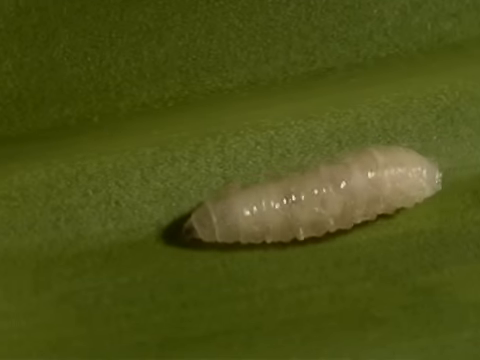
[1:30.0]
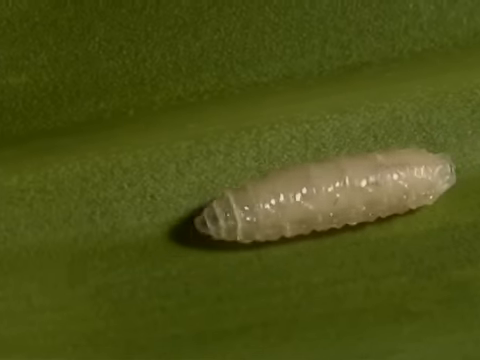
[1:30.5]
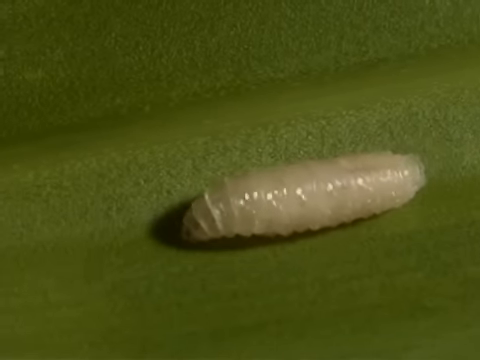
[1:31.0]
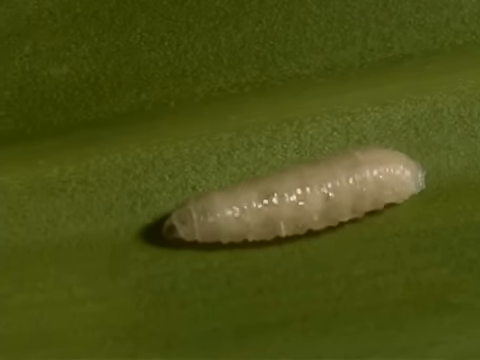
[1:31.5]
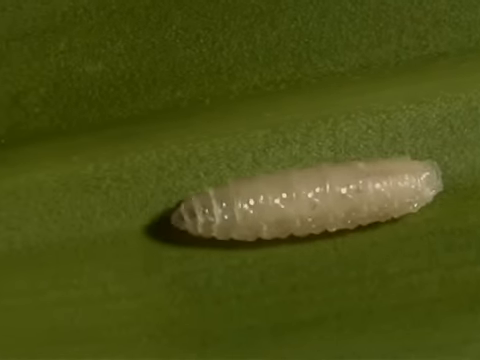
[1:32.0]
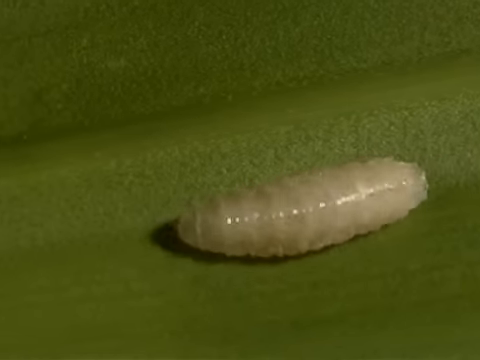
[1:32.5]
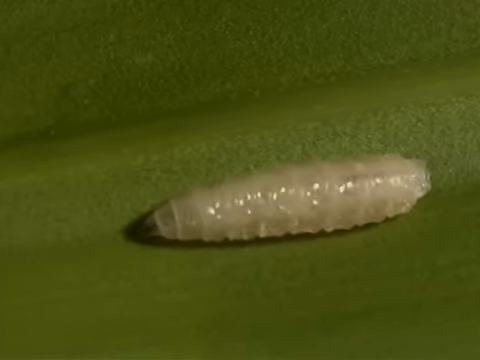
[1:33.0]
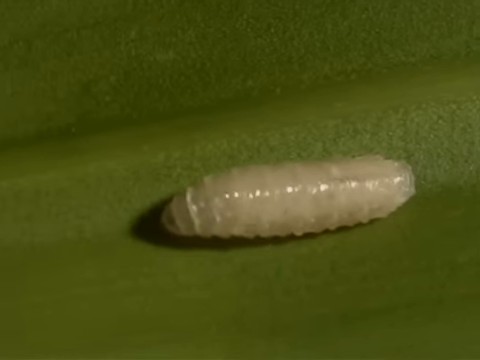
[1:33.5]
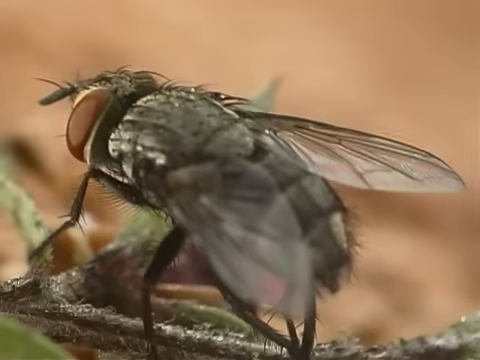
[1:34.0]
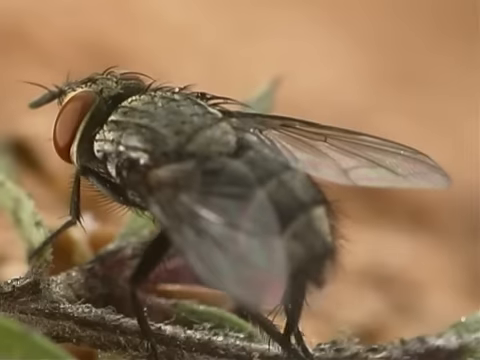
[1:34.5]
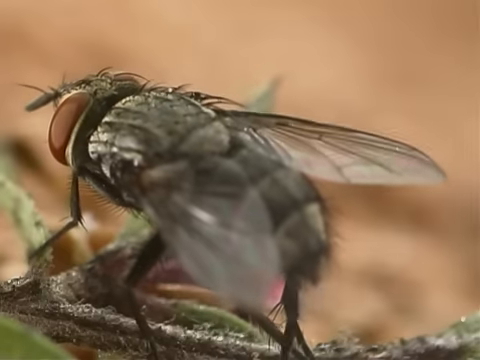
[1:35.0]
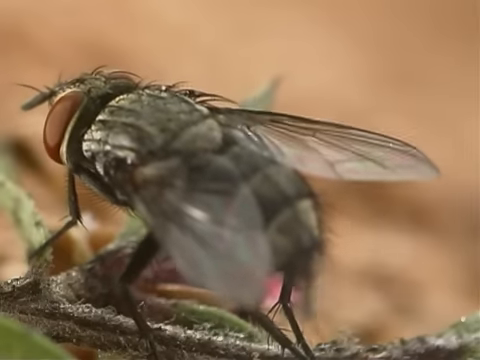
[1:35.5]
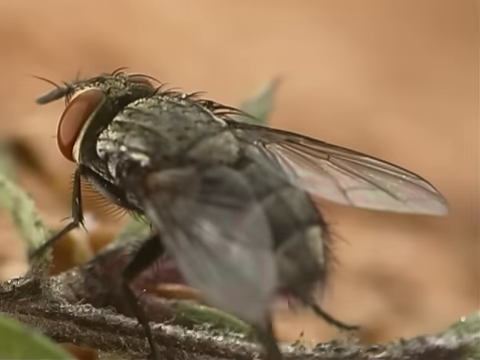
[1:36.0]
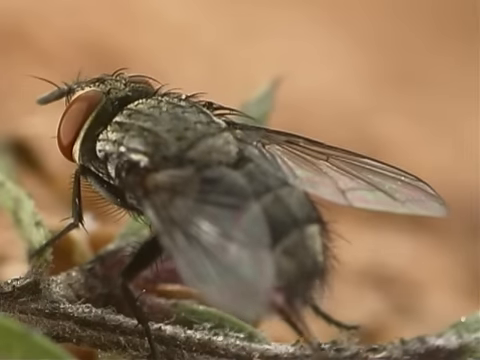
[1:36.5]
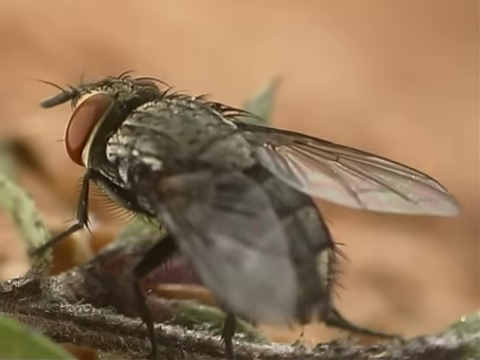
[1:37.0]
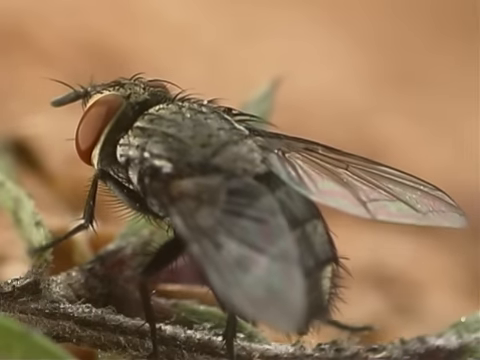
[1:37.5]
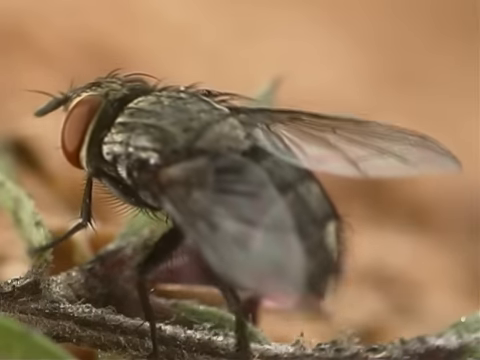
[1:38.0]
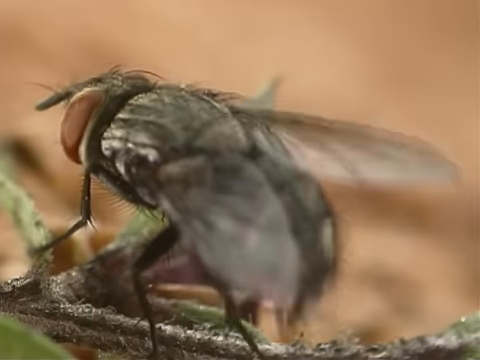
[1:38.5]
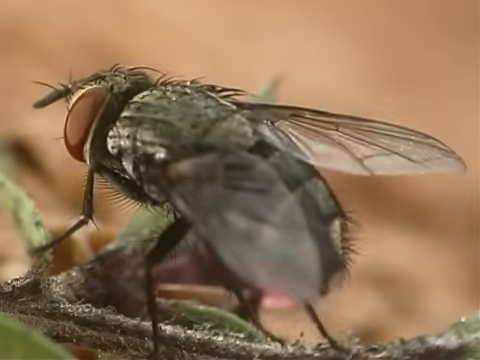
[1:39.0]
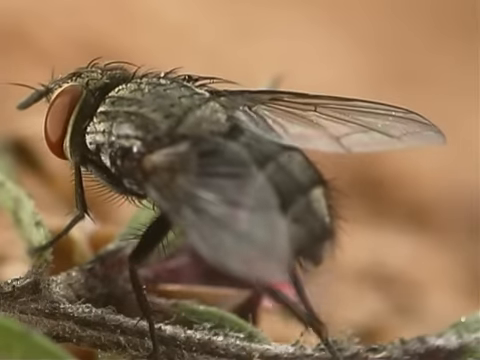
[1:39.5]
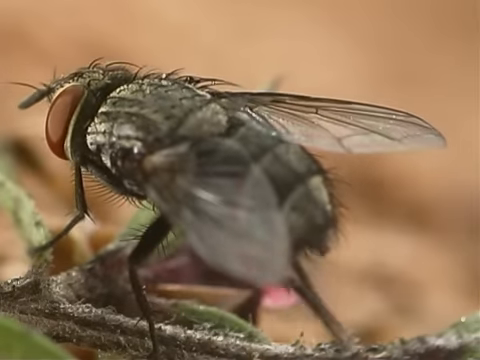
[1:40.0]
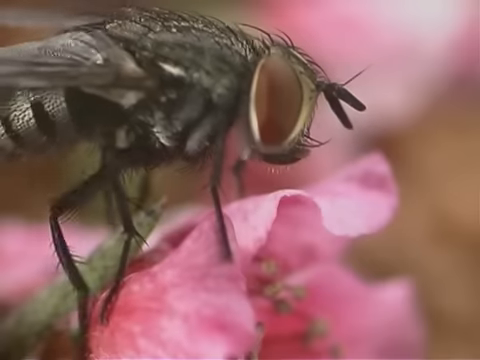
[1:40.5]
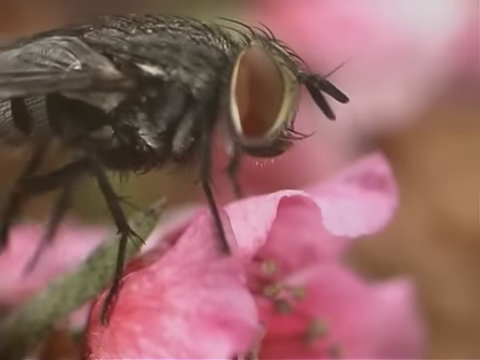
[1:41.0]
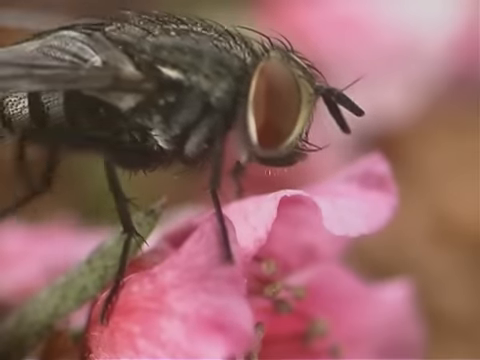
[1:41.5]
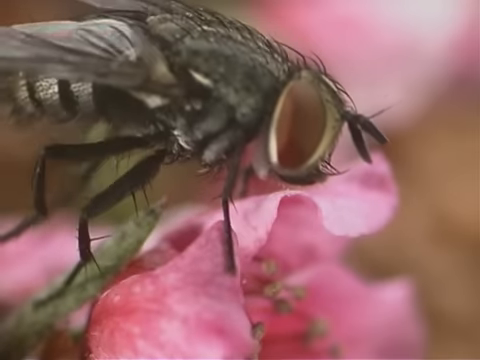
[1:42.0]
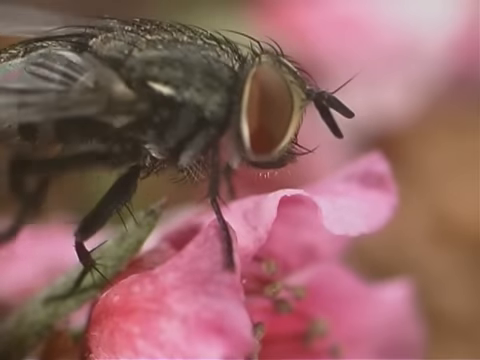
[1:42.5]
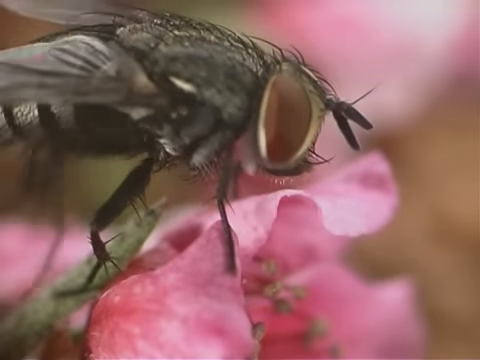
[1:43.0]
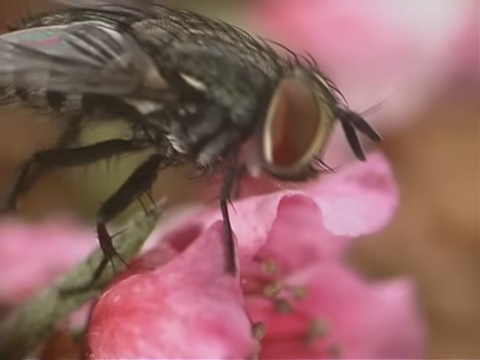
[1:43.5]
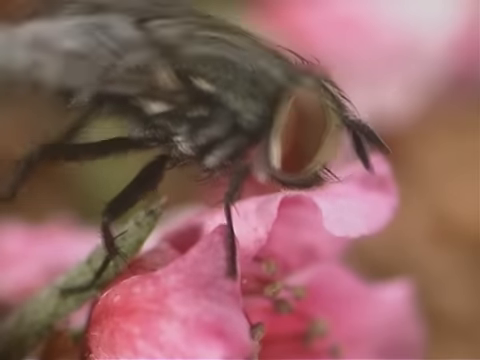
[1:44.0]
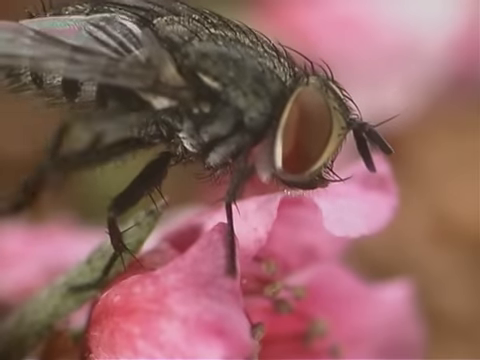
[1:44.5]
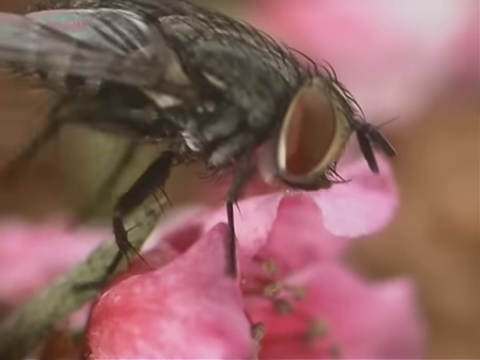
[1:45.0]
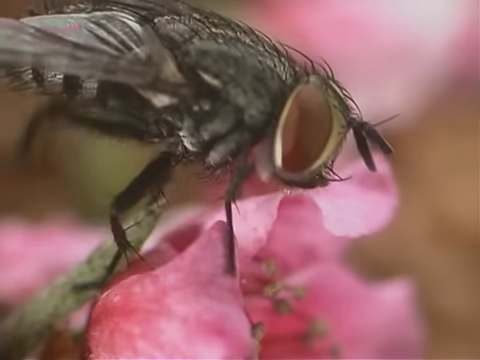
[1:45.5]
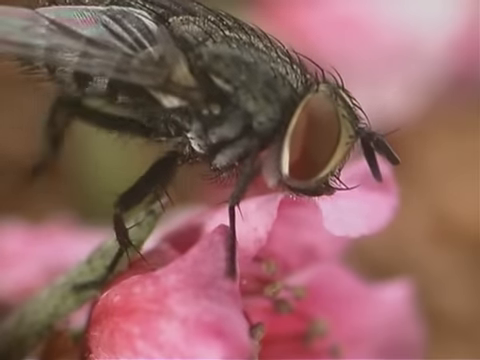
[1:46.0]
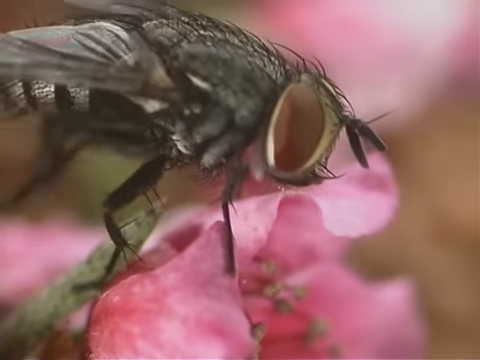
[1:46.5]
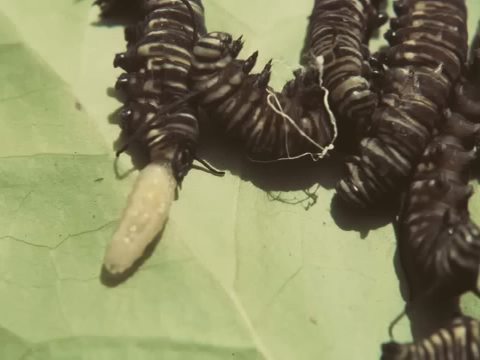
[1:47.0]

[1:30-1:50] The pupa continues its caterpillar-like movement across the green leaf. The video then moves back to a fly, seen from behind, showing its two transparent wings and its three body parts: the head, thorax and abdomen. The fly sits on what looks like a leaf or some light leaf stems. Its antennae are at the front of the head, followed by two orange eyes, and there are three little segments to the abdomen. It rubs its back legs together in a very fast motion. The fly is then seen from the side at a different angle, showing one of its eyes, its antennae, one of its wings and all of its legs, which are black. The back legs rub together very fast while it supports itself with its front legs on the top of a pink flower, and the pink flower moves slightly as it rubs its back legs.